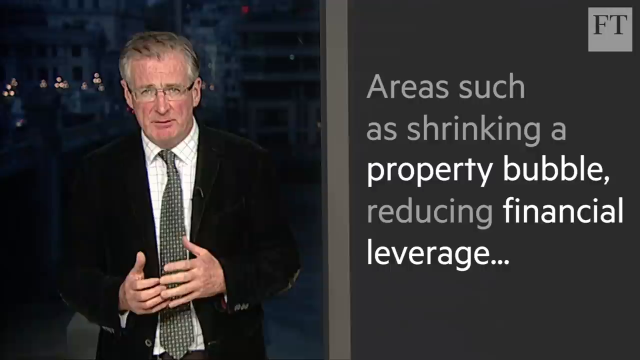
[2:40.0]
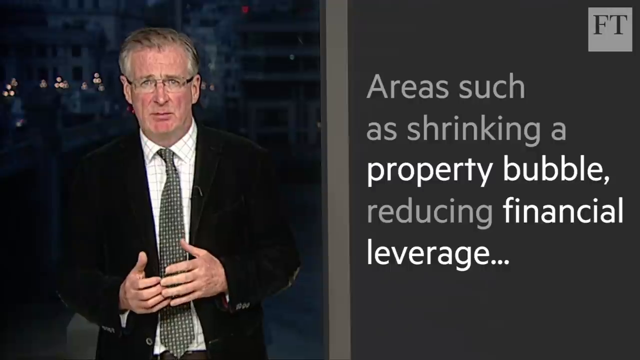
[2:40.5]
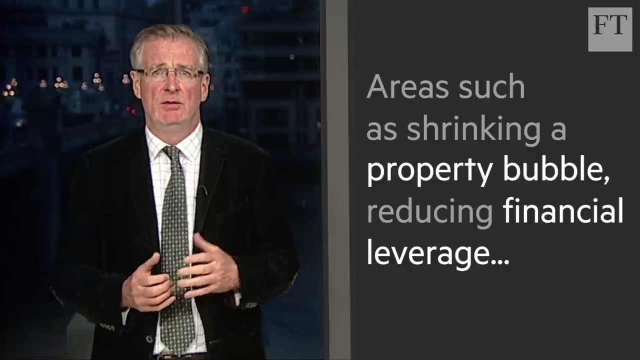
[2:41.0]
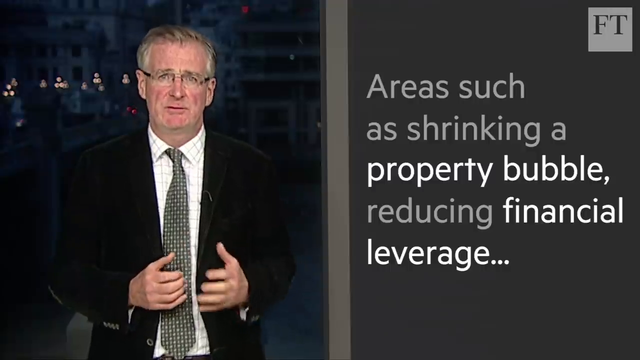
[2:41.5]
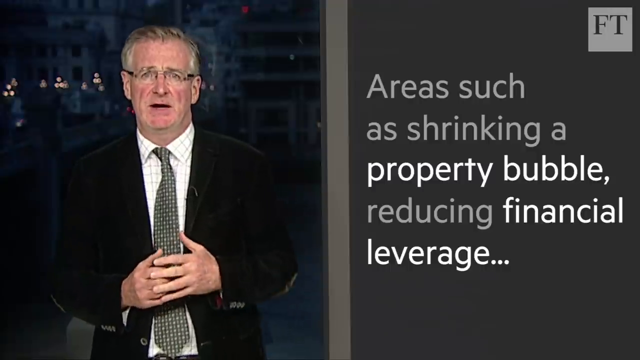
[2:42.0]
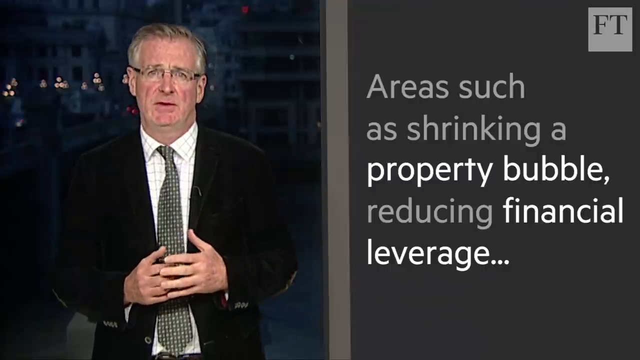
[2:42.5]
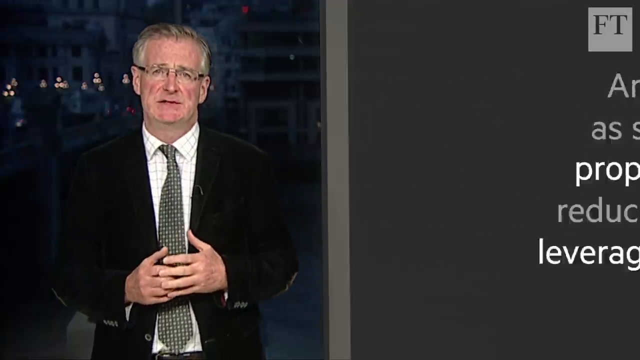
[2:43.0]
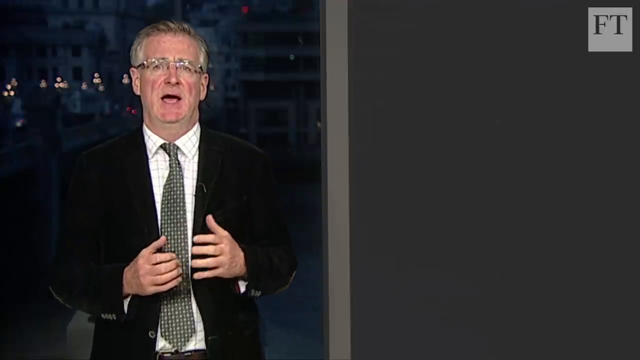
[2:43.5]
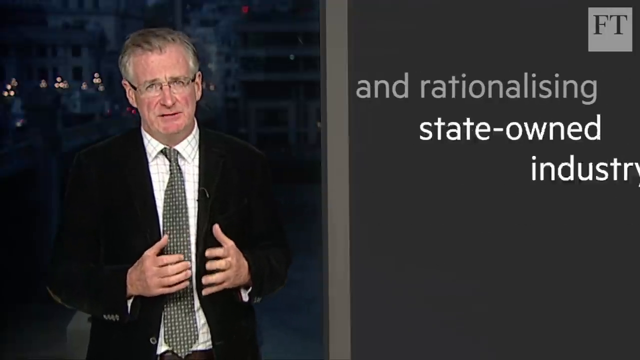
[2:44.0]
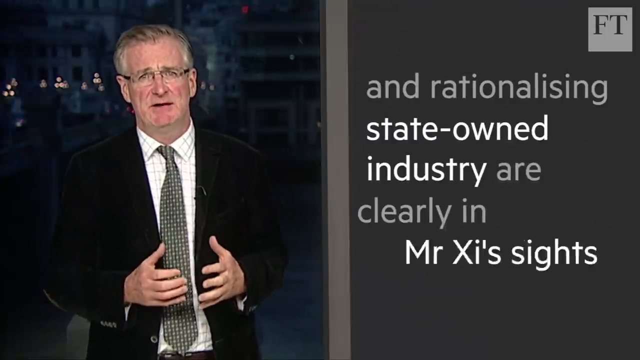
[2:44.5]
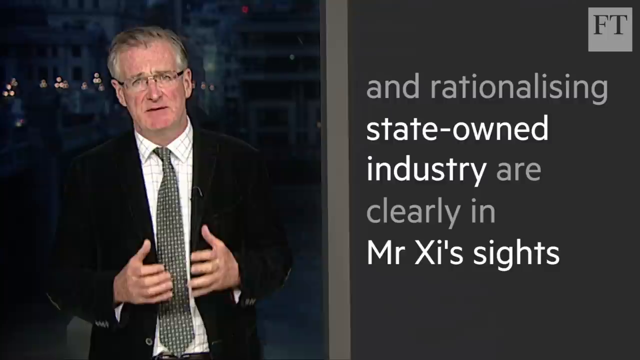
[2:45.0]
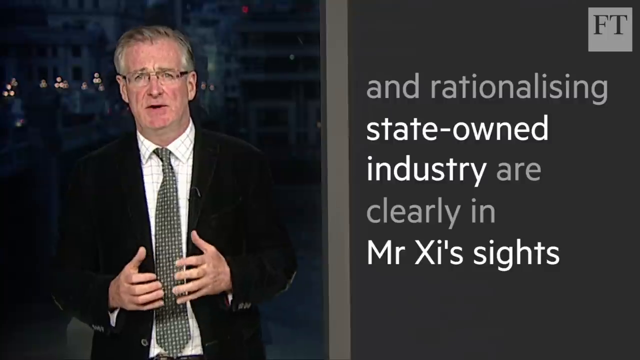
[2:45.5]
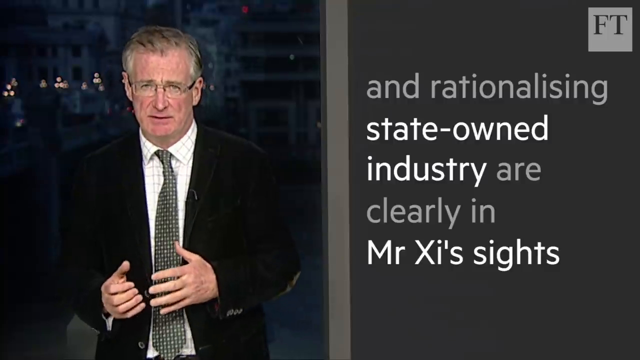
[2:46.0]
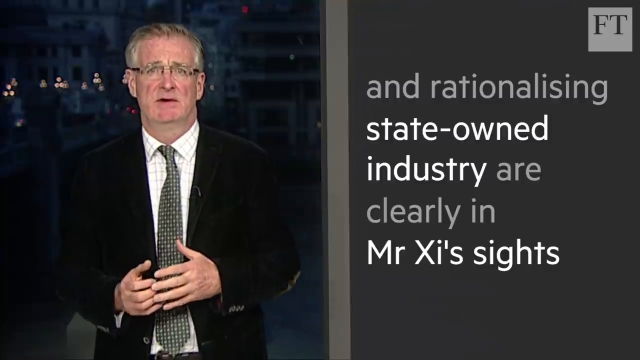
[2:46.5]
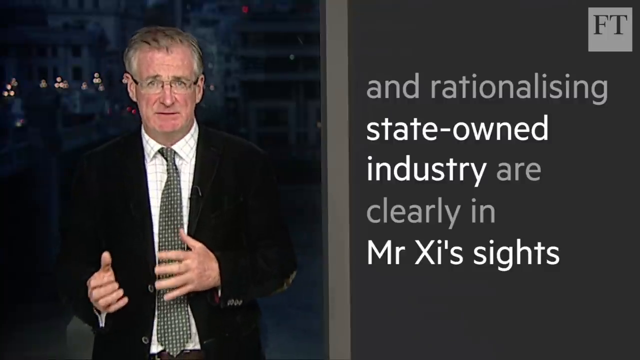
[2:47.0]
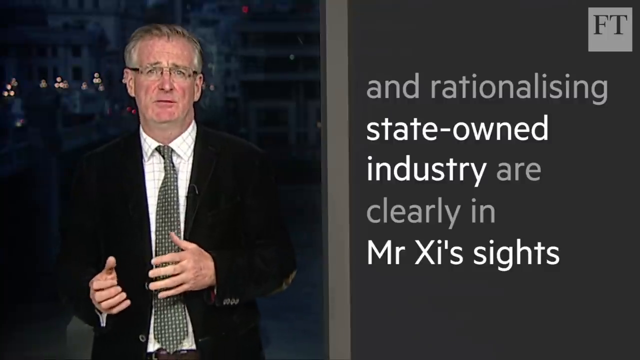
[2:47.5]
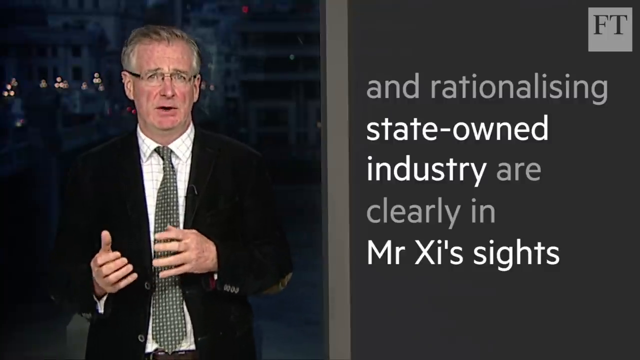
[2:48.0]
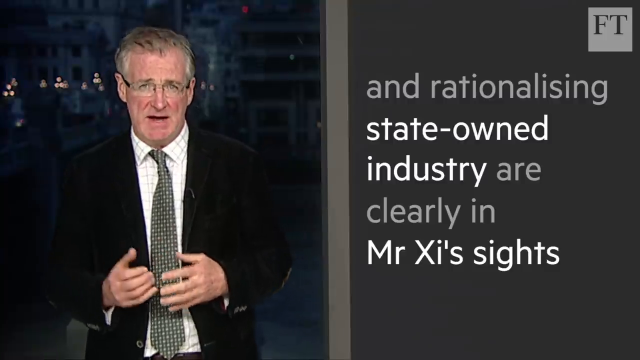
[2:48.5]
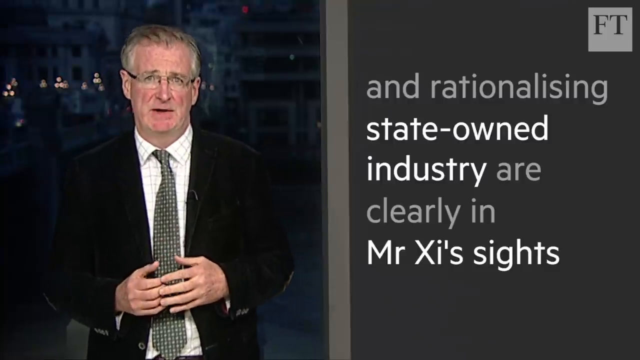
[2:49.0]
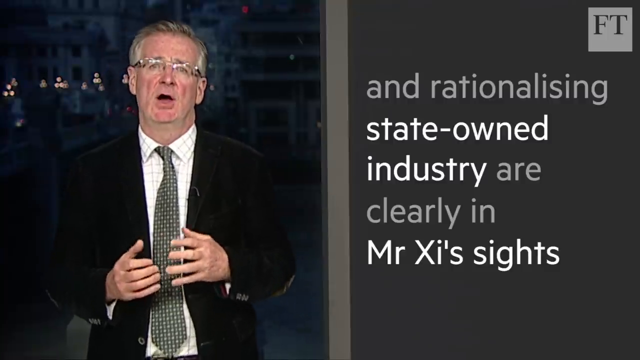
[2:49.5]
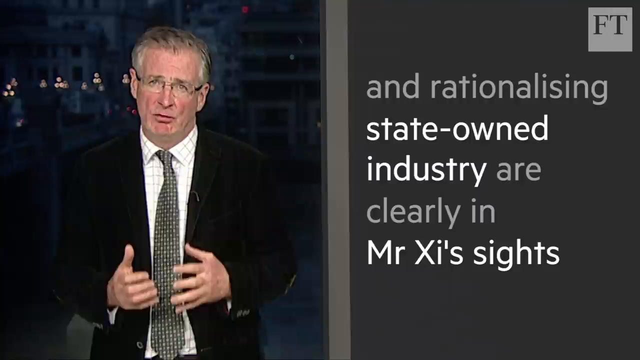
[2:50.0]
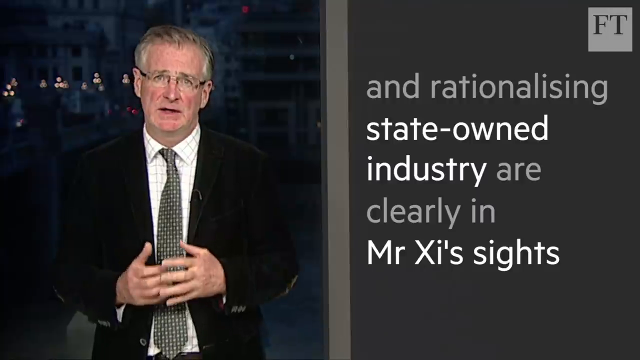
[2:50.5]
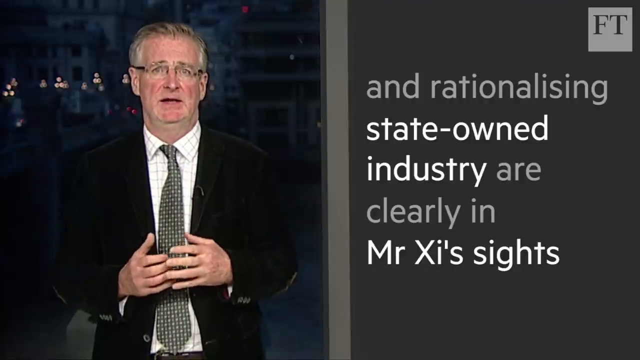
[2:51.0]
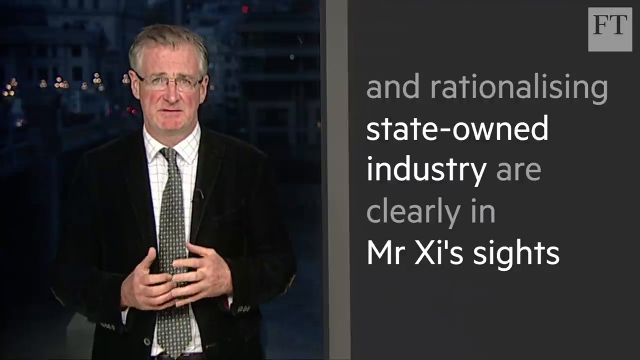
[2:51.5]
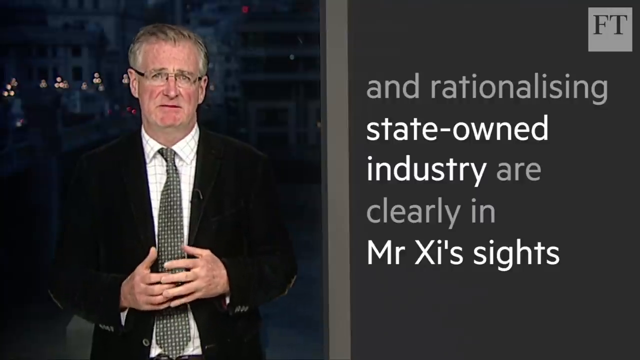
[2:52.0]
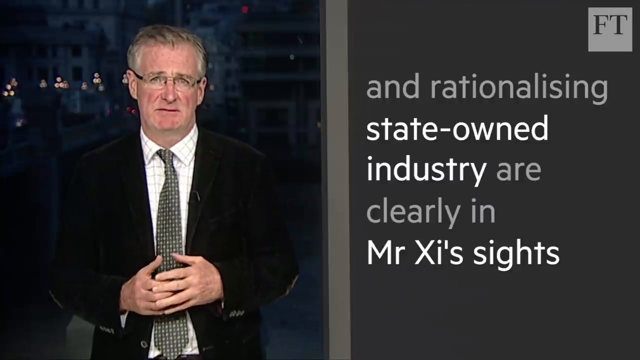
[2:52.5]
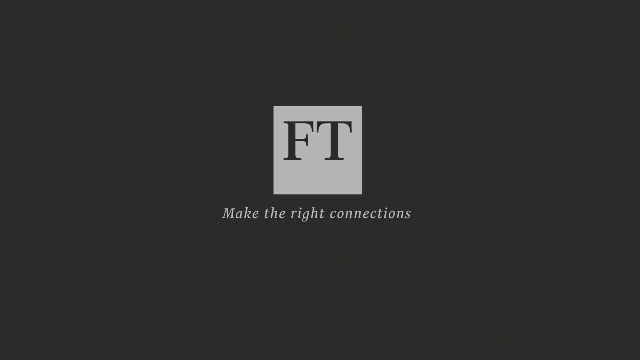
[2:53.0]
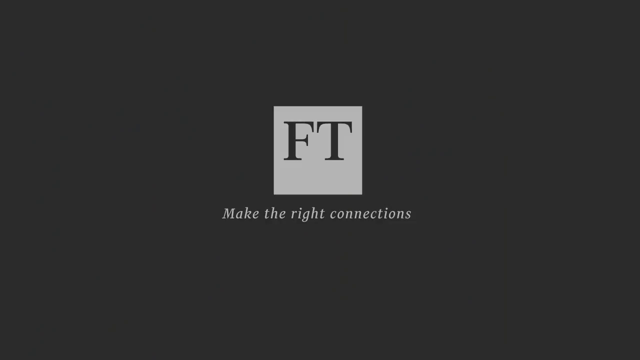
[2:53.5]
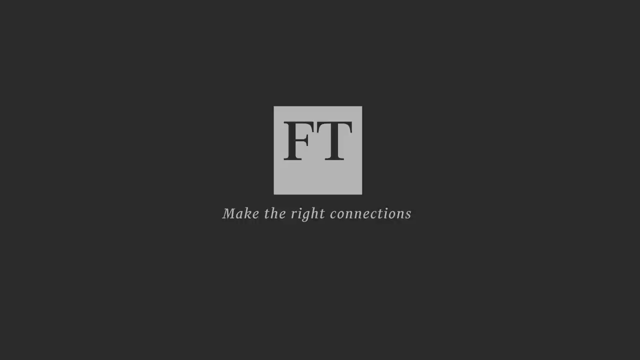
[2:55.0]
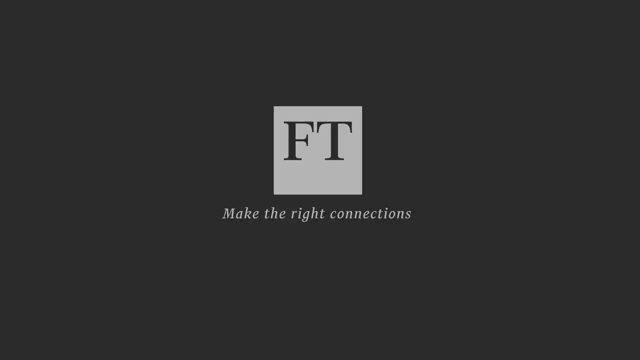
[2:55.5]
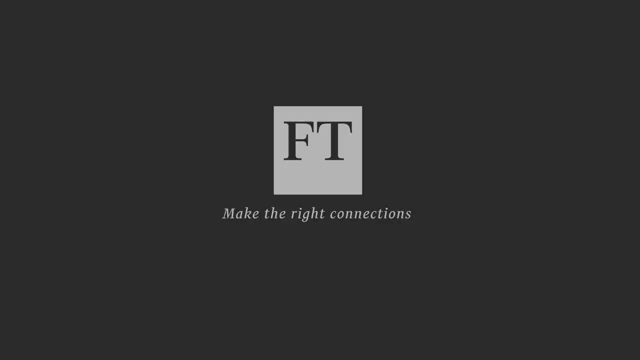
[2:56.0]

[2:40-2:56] The newscaster talks on the left-hand side of the screen. He has graying hair receding at the hairline and wire-rimmed glasses, and wears a dark jacket, a white checked shirt and a dark gray patterned tie. His hands are held in front of him at waist level, and he speaks directly to the camera. On the right, against a dark gray background, is a text area with the letters "FT" in dark gray set in a lighter gray square in its upper right. The text reads "areas such as shrinking a property bubble, reducing financial leverage, and rationalizing state-owned industry are clearly in Mr. Xi's sights." The man emphasizes these words with his hands. The video then changes to the Financial Times logo: a capital F and capital T in dark gray against a lighter gray square, all set against a dark gray background. Beneath the square and logo, it says "make the right connections."